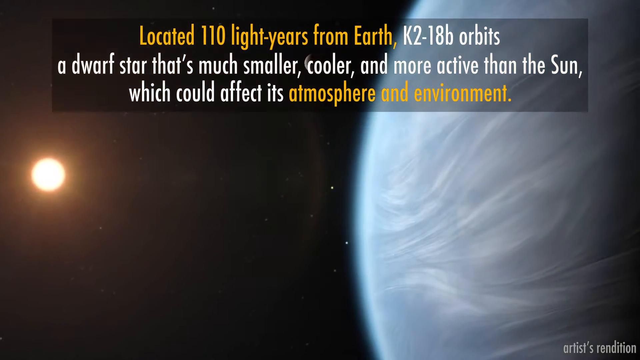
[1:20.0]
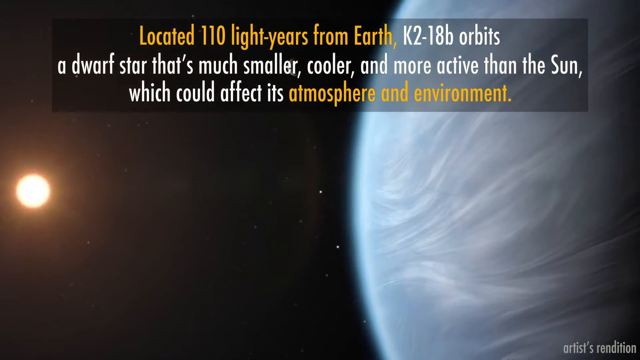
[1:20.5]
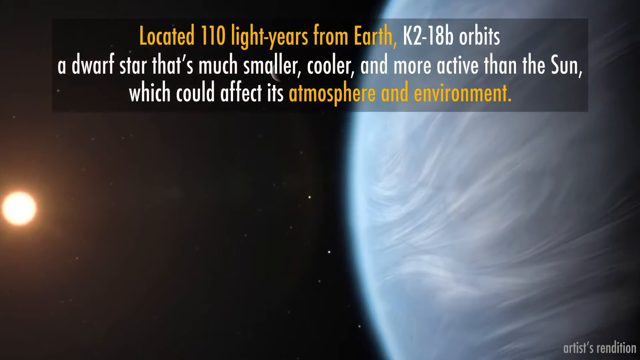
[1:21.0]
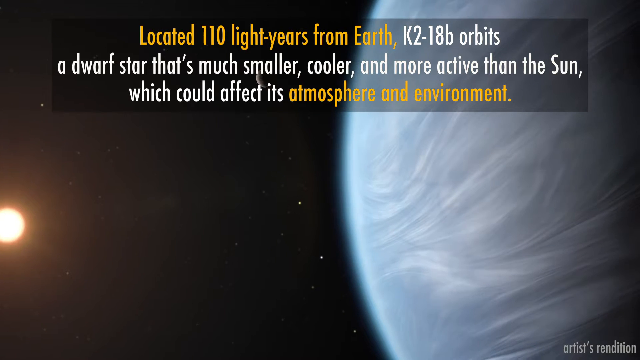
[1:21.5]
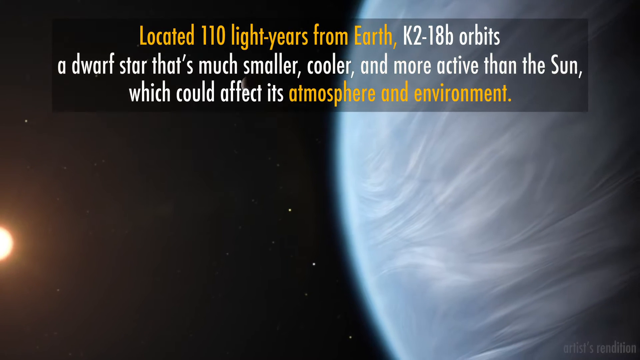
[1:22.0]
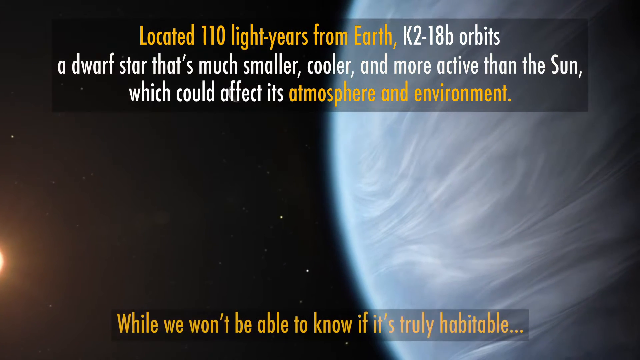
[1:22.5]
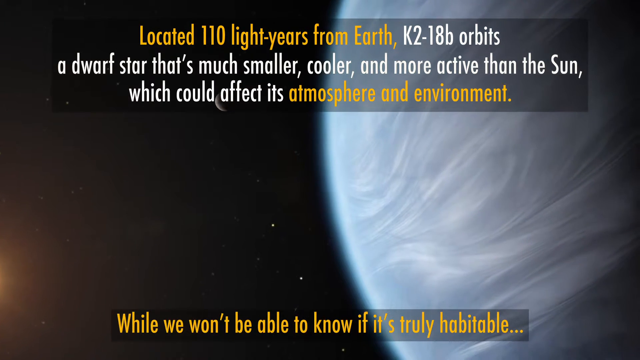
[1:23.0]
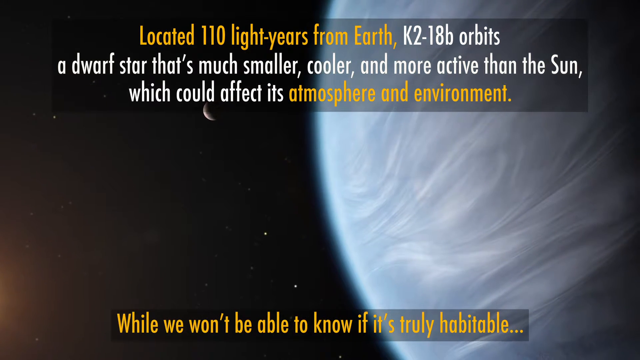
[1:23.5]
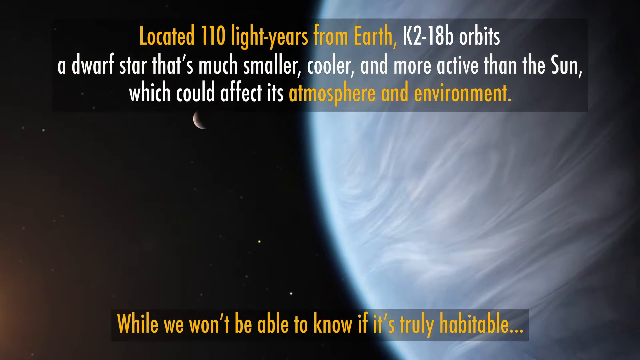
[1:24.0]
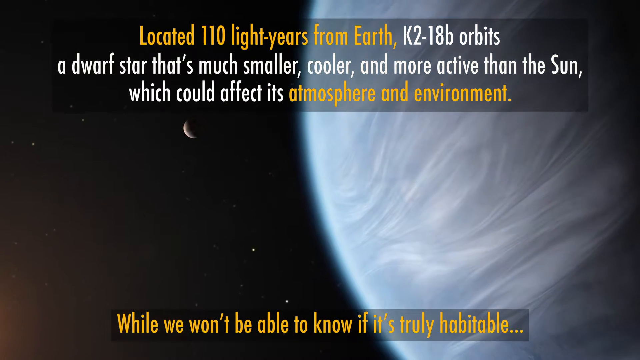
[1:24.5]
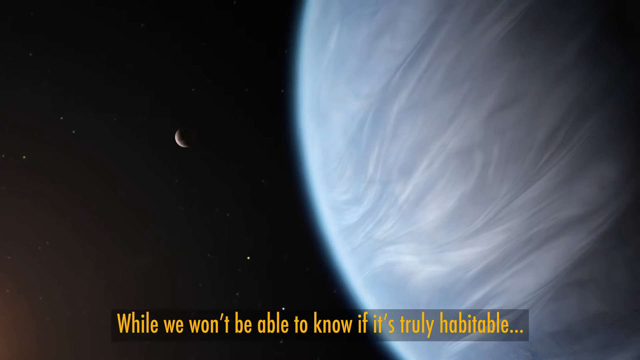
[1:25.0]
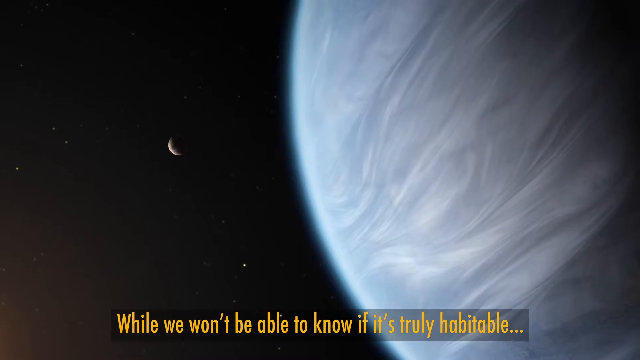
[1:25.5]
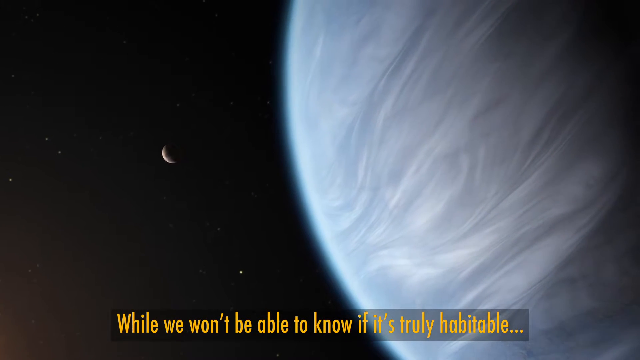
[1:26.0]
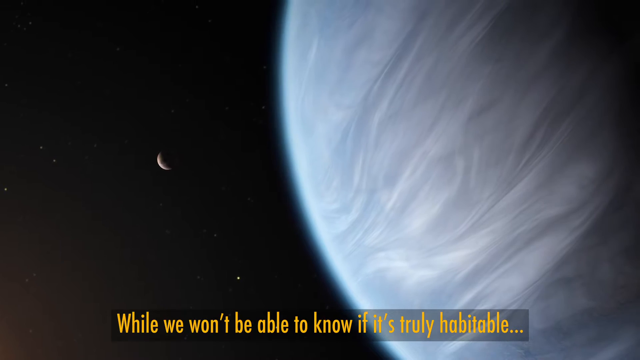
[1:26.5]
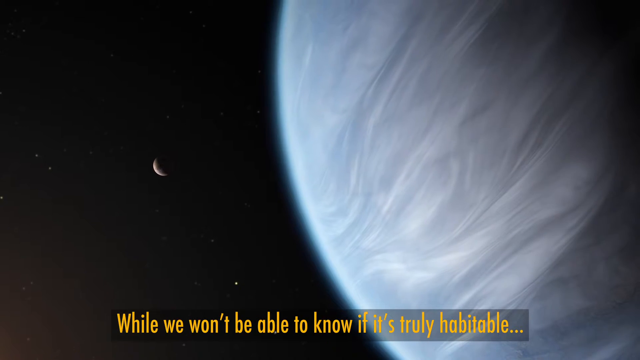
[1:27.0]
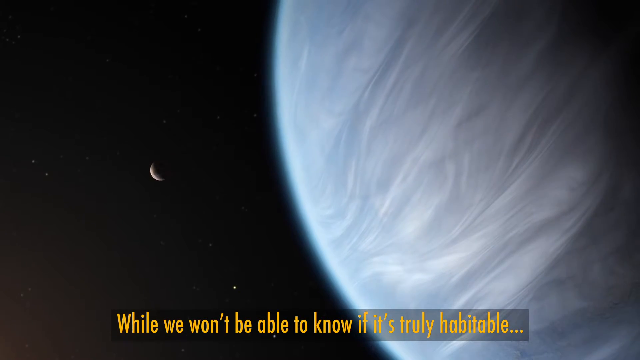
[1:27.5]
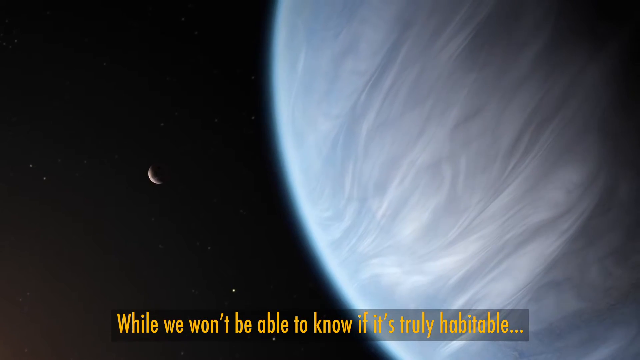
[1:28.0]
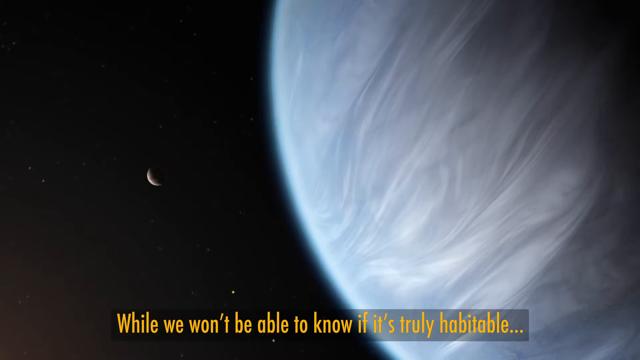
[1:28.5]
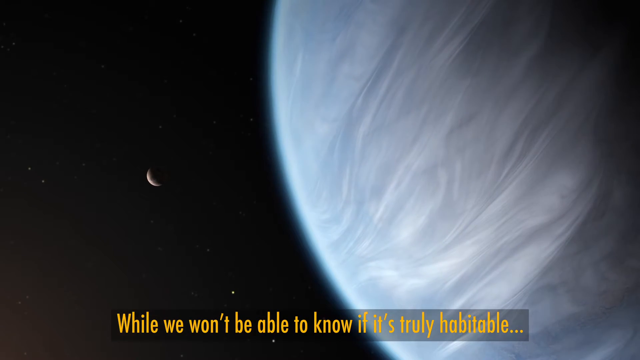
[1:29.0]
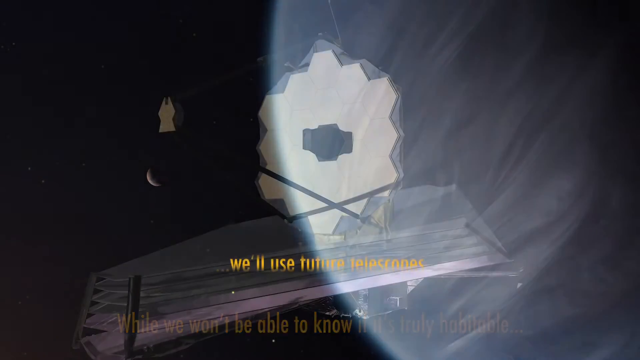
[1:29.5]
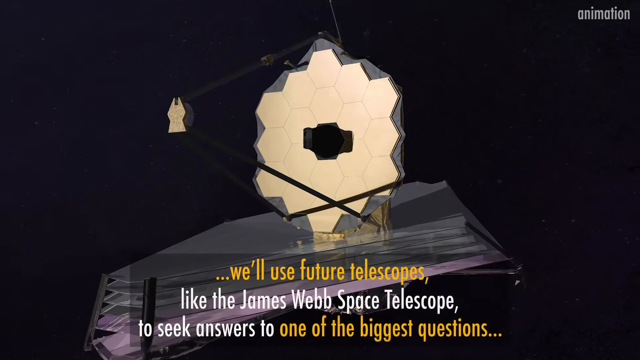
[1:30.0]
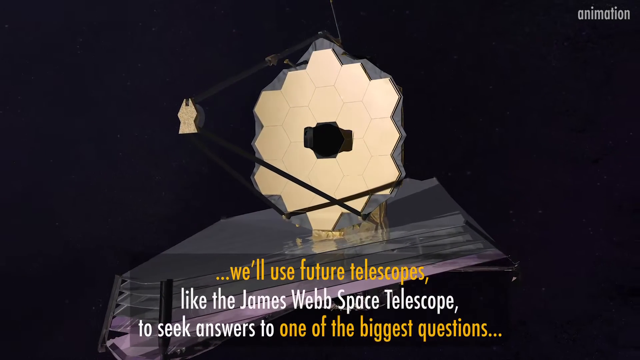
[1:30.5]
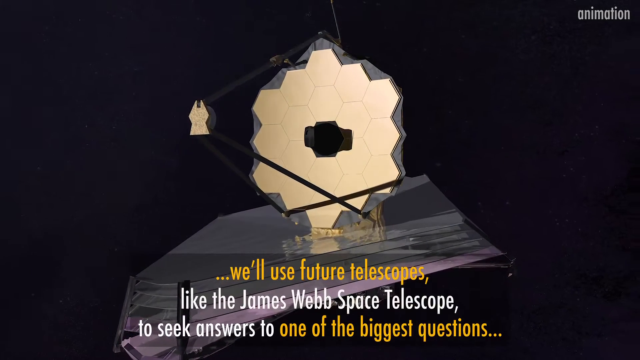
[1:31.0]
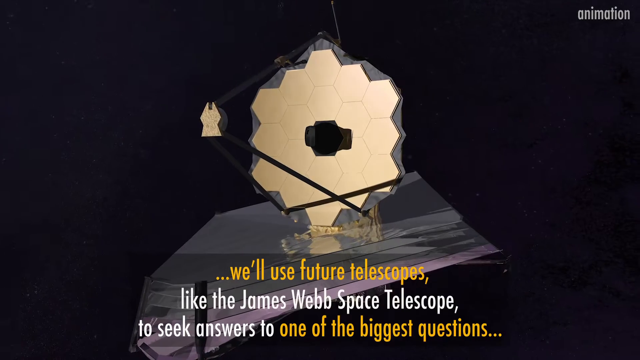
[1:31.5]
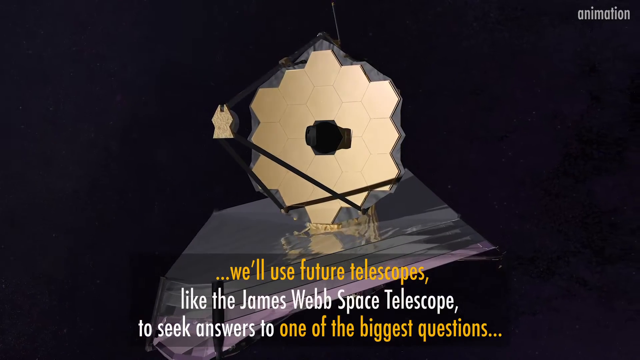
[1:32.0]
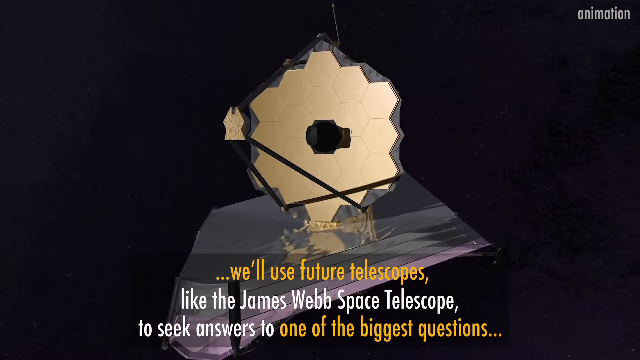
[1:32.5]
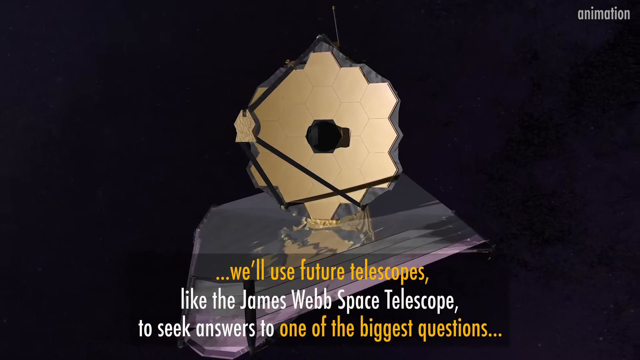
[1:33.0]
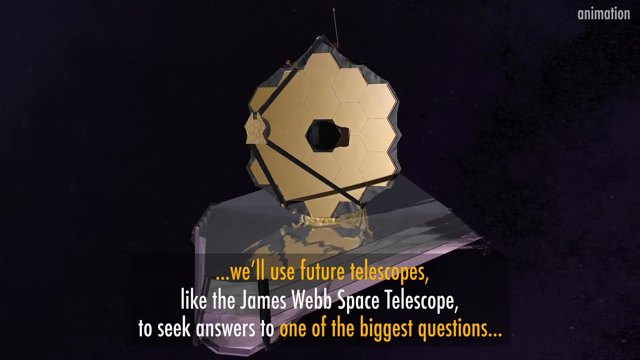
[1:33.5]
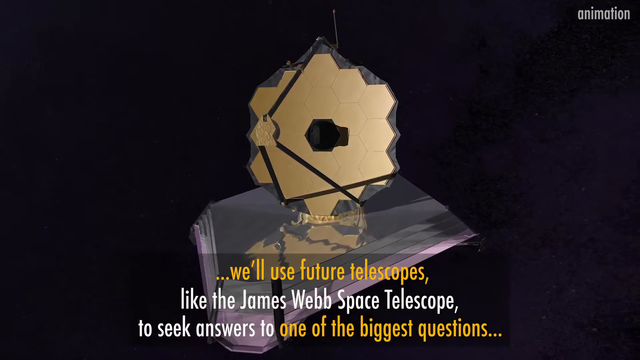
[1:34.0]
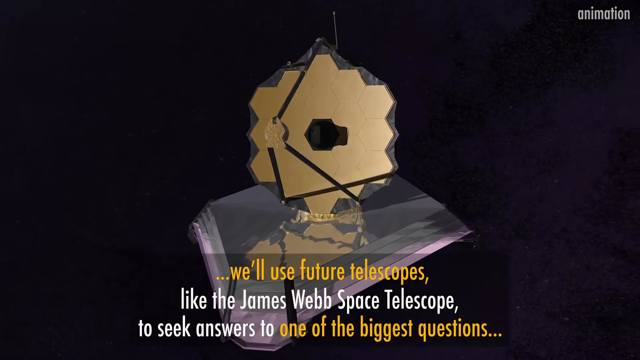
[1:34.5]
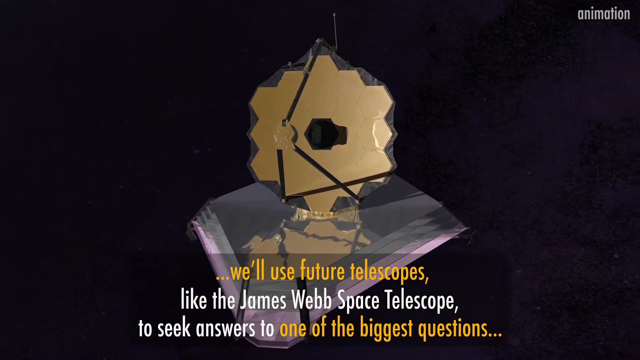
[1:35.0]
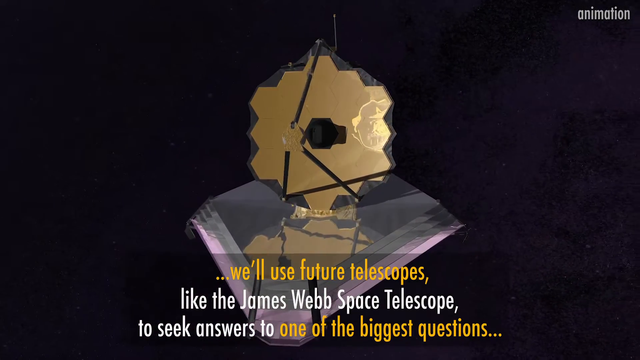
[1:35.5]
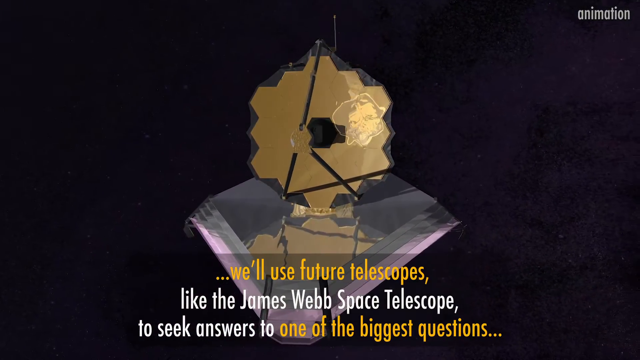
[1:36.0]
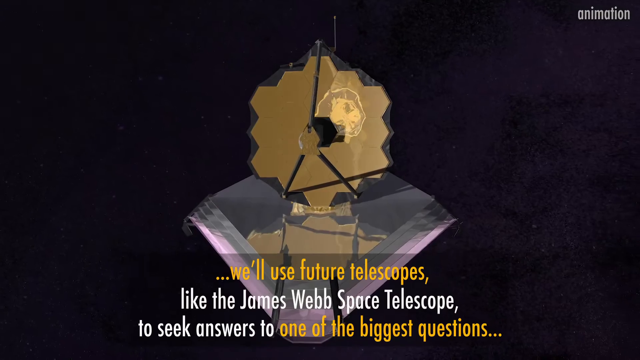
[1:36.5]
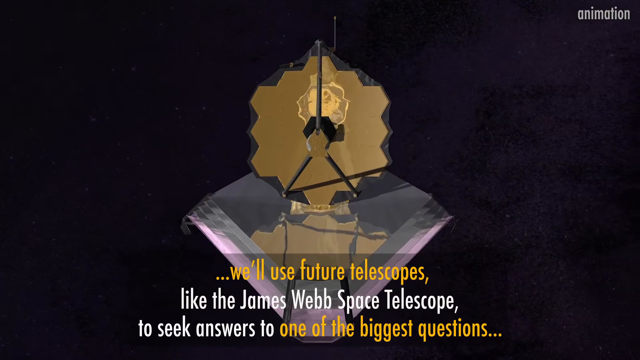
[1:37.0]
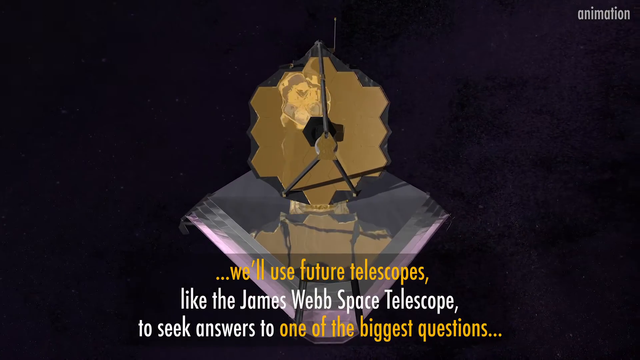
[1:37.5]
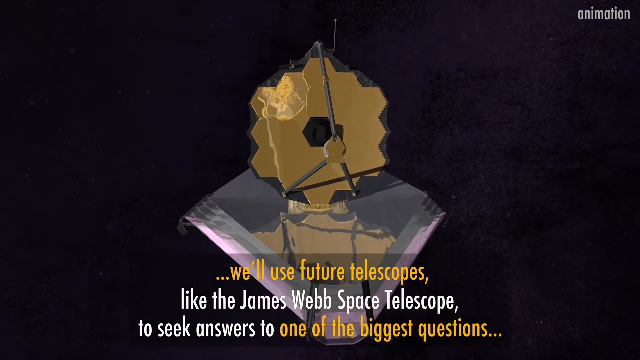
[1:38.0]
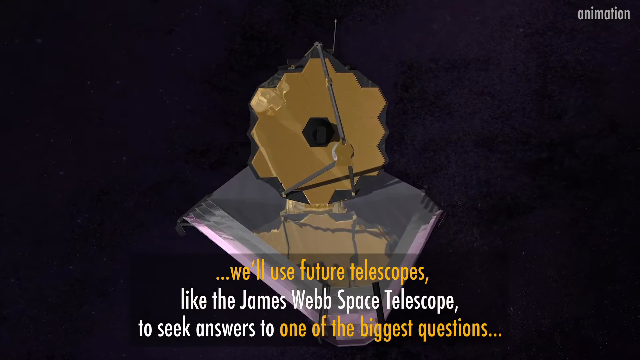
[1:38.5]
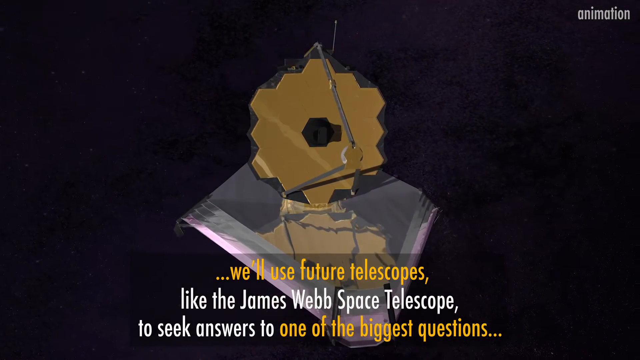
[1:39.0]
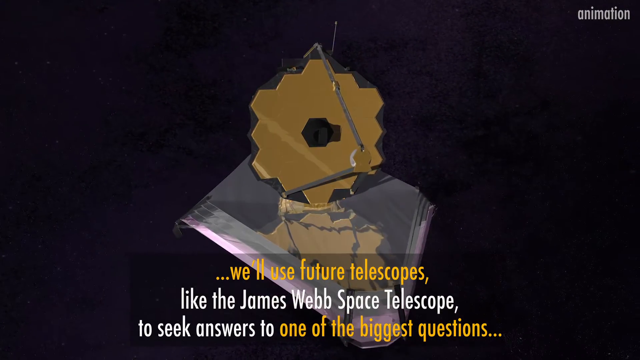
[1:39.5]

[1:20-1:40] A gray planet is on the right of the screen, and the left of the screen shows stars and a moon-like planet. At the top is the text "located 110 light years from Earth K2-18b orbits the dwarf star that's much smaller, cooler, and more active than the sun which could affect its atmosphere and environment." At the bottom it says "while we won't be able to know if it's truly inhabitable". The screen changes. At the top is a honeycombed circle of a kind of goldish color, and underneath it says "will use future telescopes like the James Webb Space Telescope to seek answers to one of the biggest questions" and "NASA Jet Propulsion Laboratory, California Institute of Technology". The honeycomb circle looks somewhat like it may be metal, and it has an angled base underneath with five layers of glass or metal. It swirls counterclockwise over a black background.